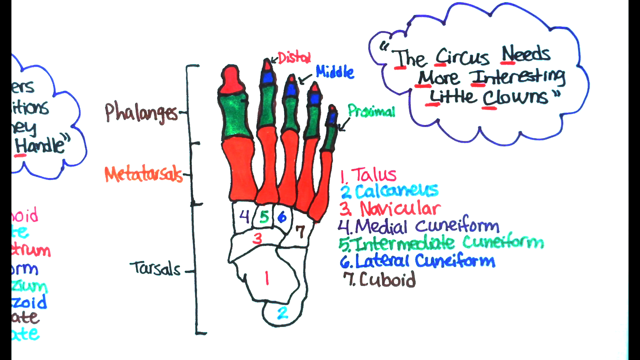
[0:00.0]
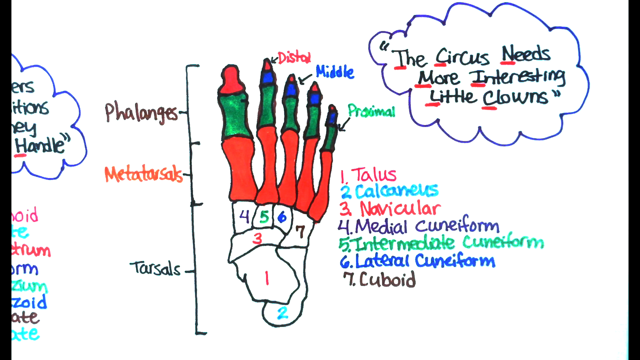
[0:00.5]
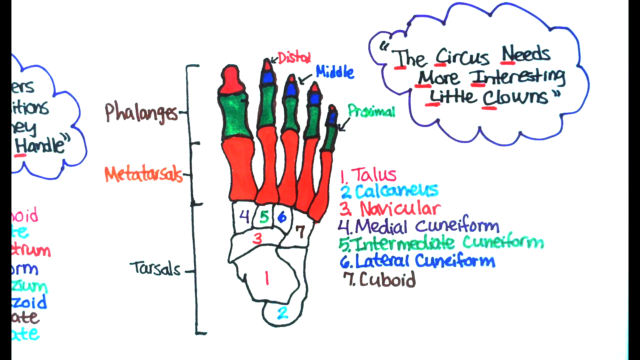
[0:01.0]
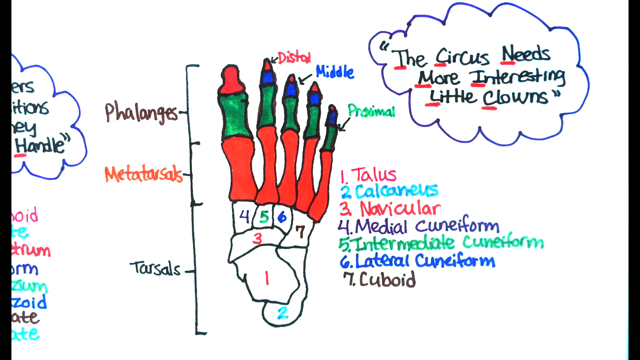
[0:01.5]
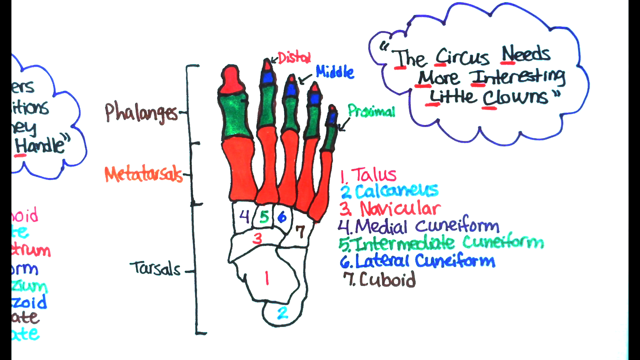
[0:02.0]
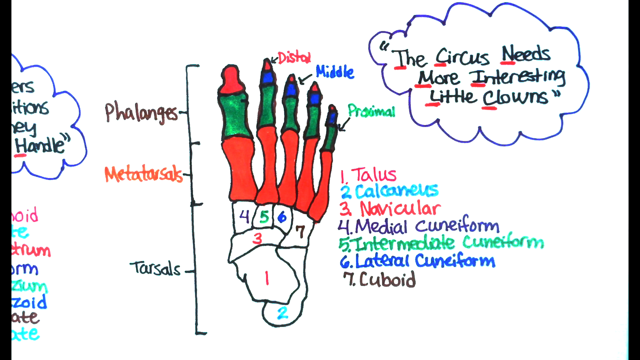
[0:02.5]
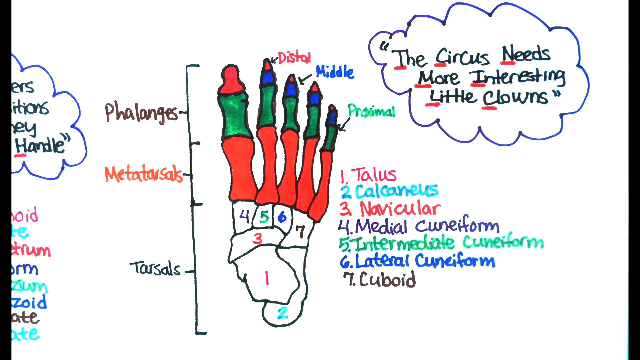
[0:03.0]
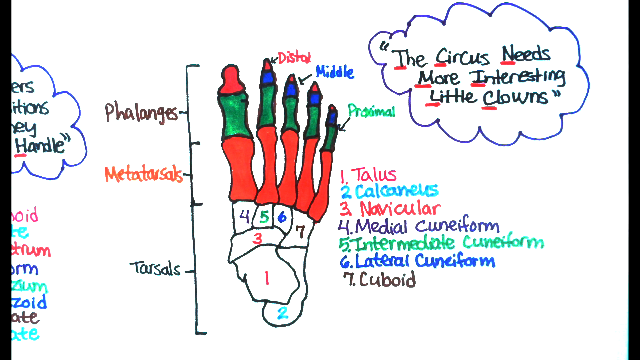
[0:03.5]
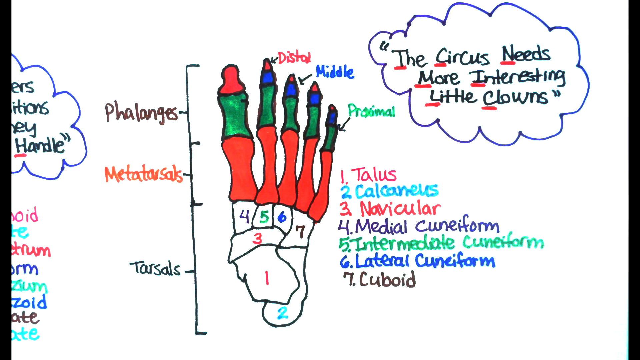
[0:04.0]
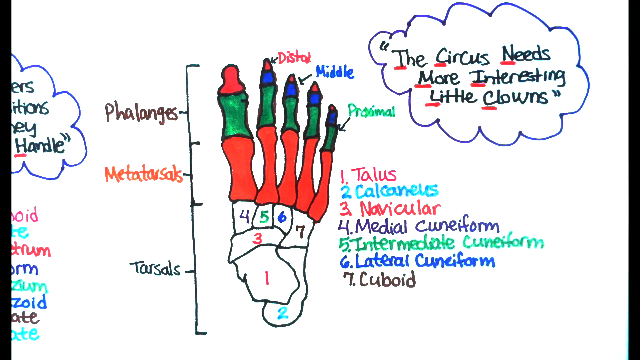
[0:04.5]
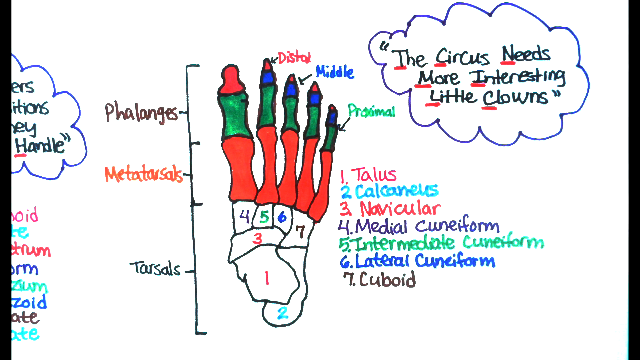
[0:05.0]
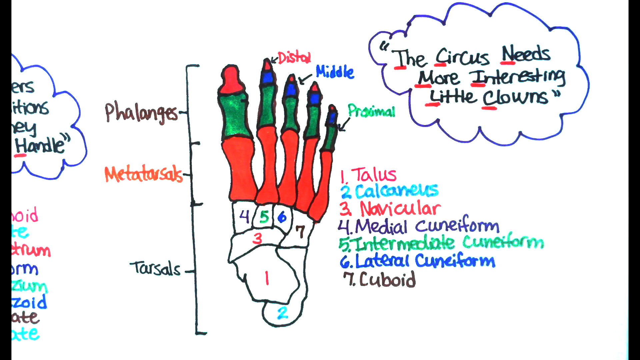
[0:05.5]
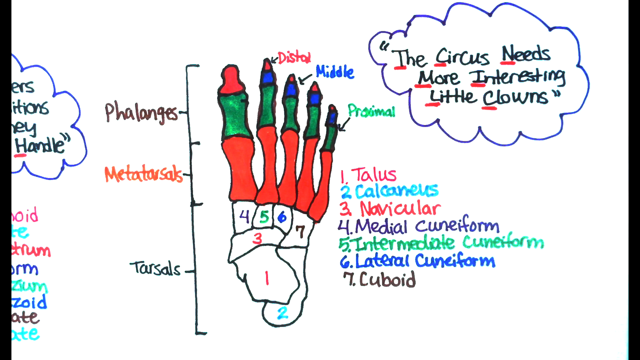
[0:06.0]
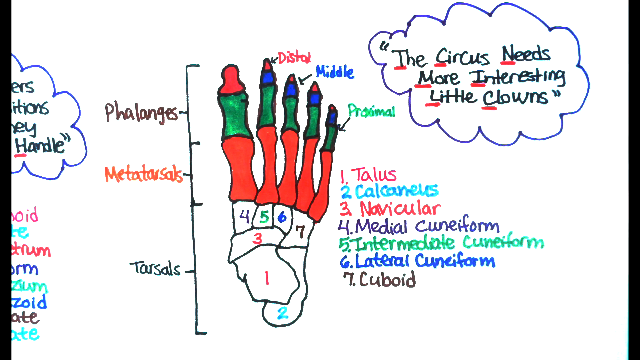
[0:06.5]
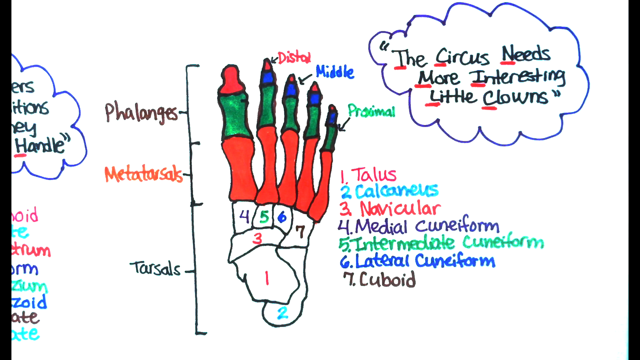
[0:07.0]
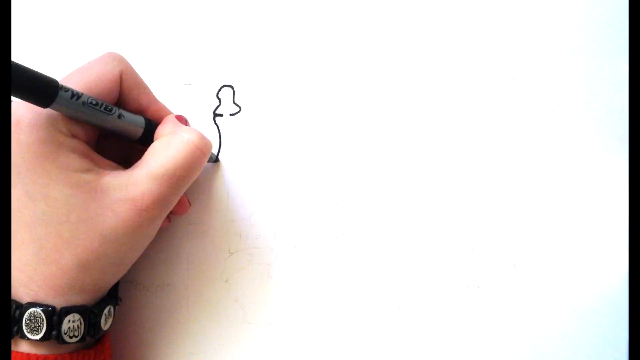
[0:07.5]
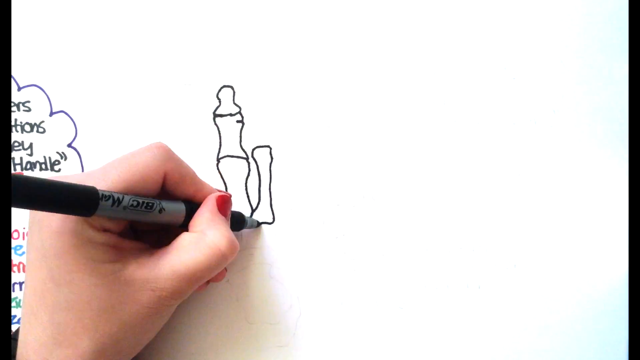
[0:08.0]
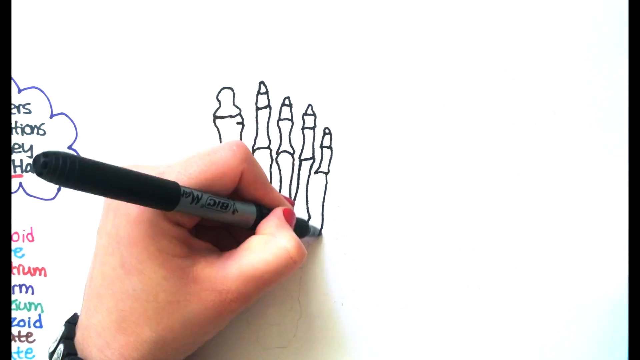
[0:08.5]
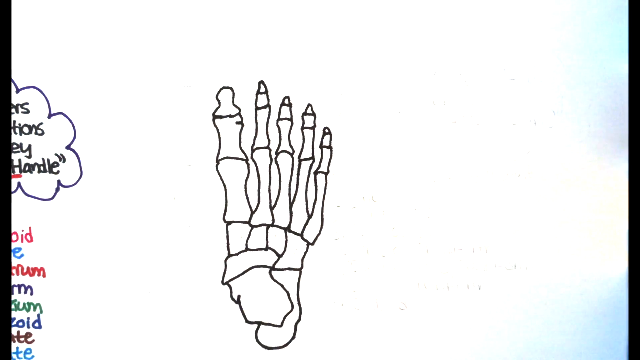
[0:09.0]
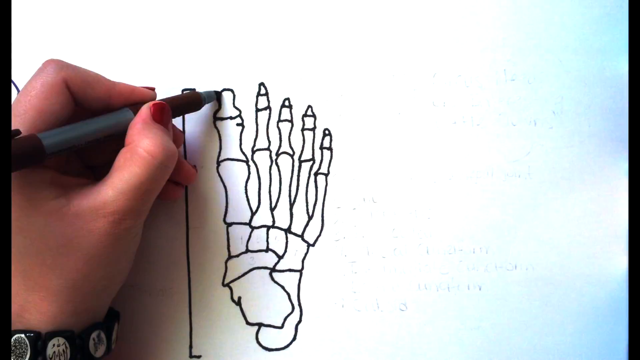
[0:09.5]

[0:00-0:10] The video opens on a white screen with a bone structure of some sort of hand or foot. Everything is labeled, with every bone within the hand or foot marked using colors and words to distinguish the different areas. A speech bubble in the top right reads "The circus needs more interesting little clowns." Many different colors of marker are used on the page. The view then switches to another image of a white screen, where a woman's hand comes up from the left holding a marker and starts drawing the bone structure of the hand or foot.